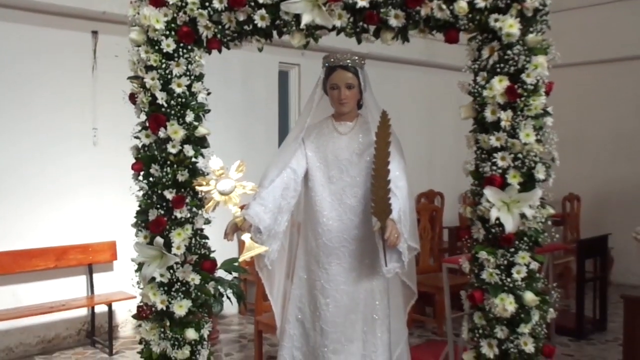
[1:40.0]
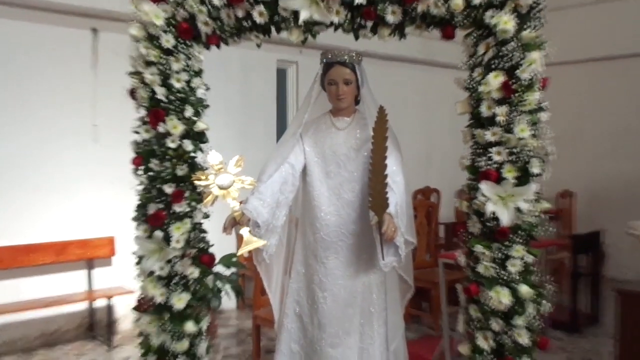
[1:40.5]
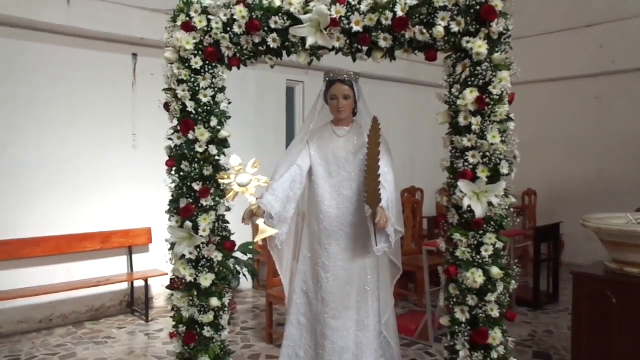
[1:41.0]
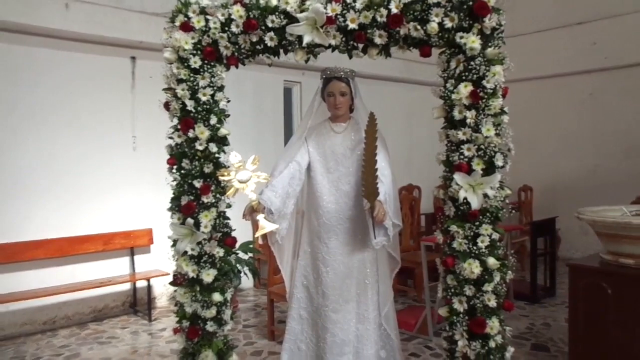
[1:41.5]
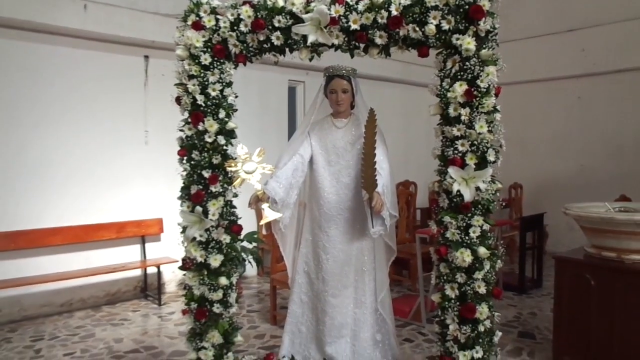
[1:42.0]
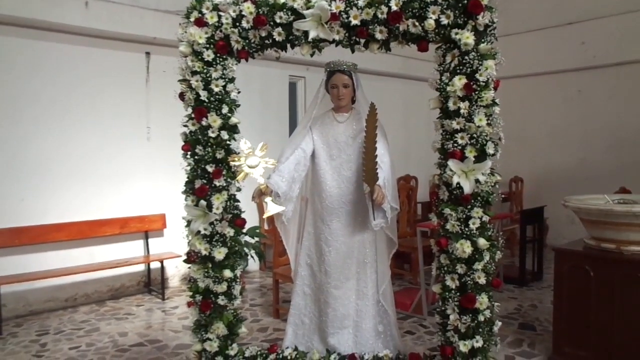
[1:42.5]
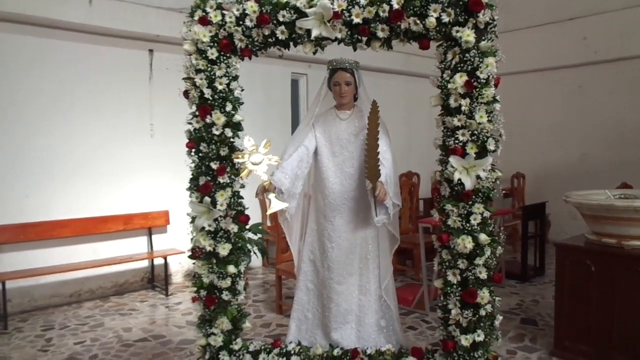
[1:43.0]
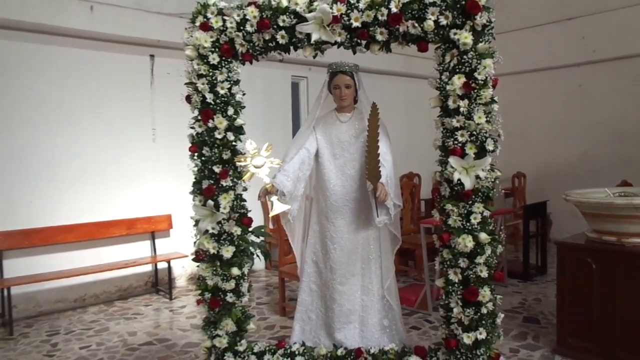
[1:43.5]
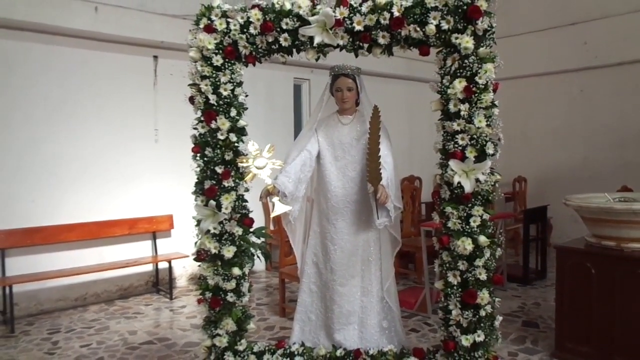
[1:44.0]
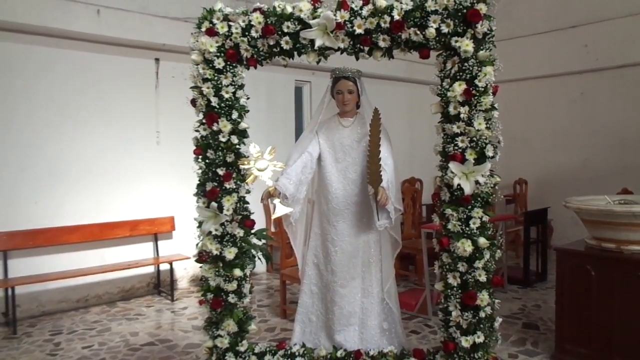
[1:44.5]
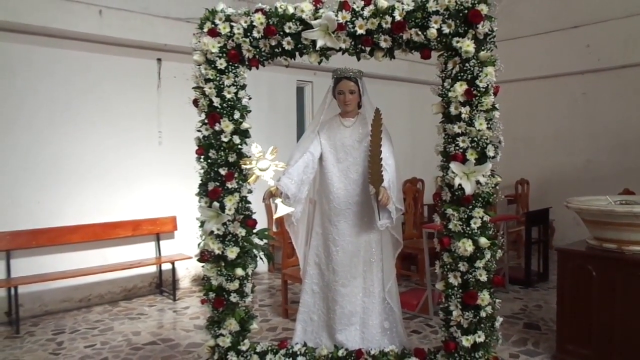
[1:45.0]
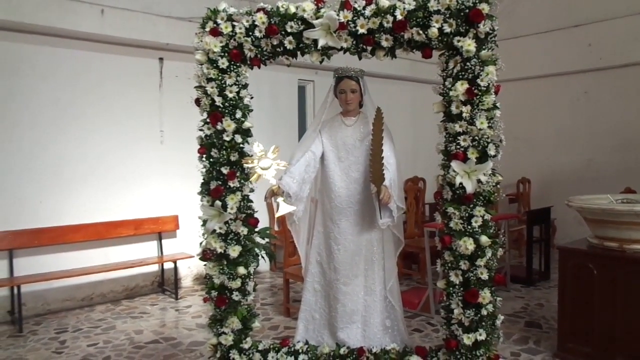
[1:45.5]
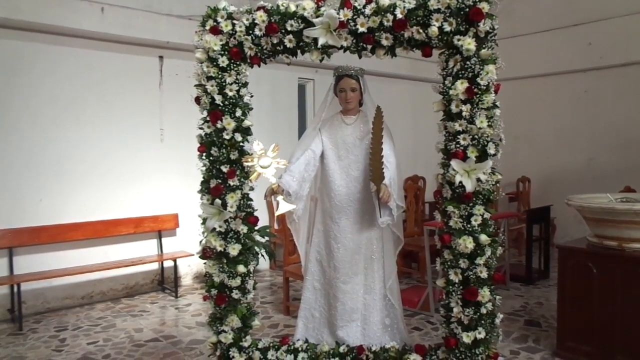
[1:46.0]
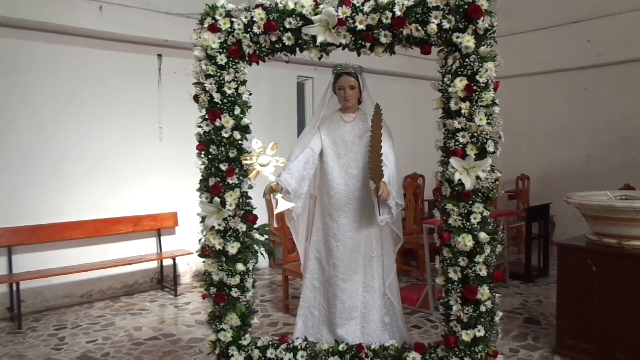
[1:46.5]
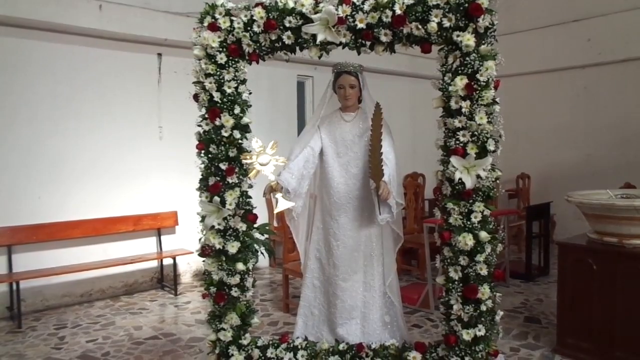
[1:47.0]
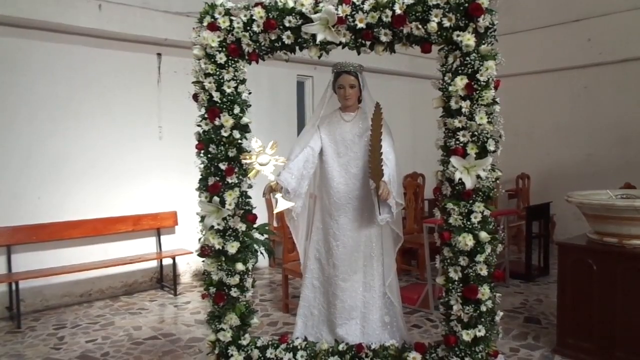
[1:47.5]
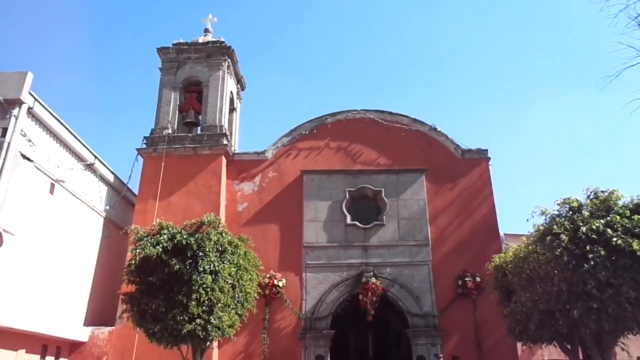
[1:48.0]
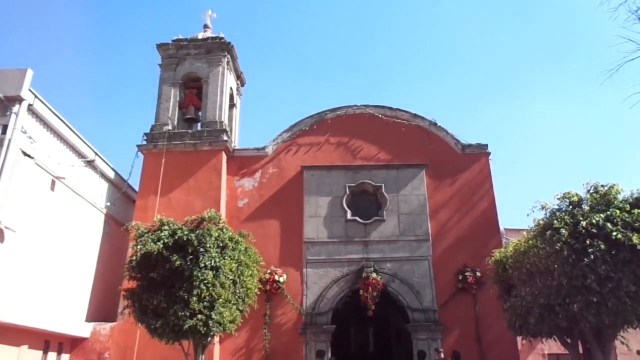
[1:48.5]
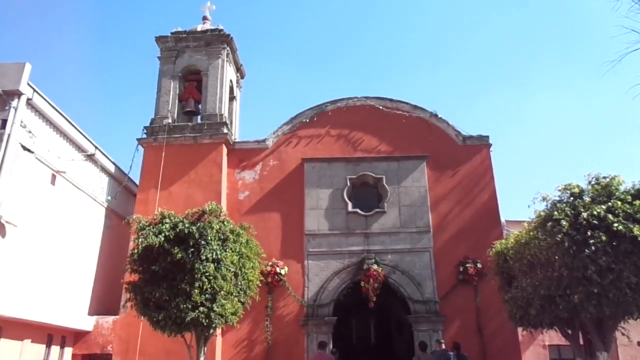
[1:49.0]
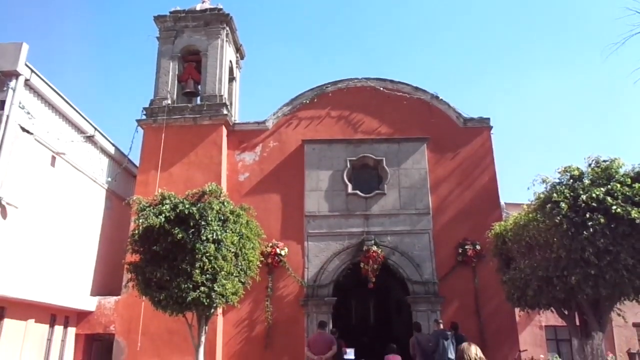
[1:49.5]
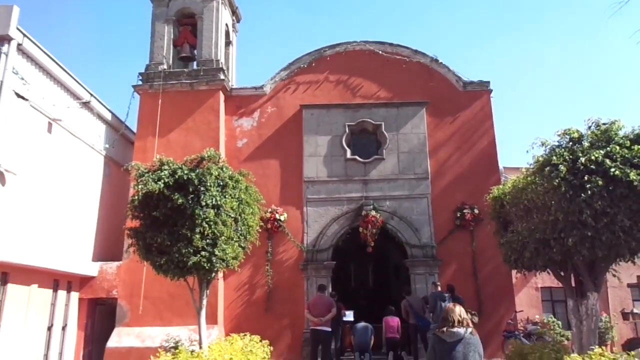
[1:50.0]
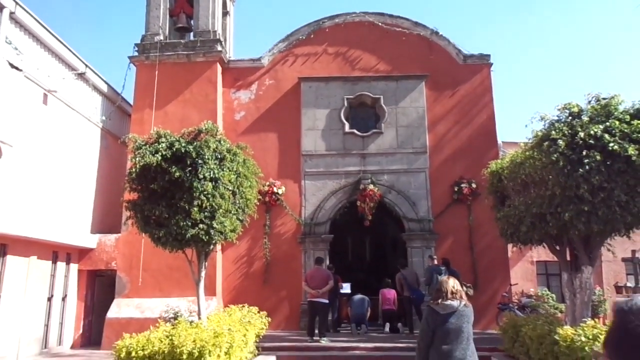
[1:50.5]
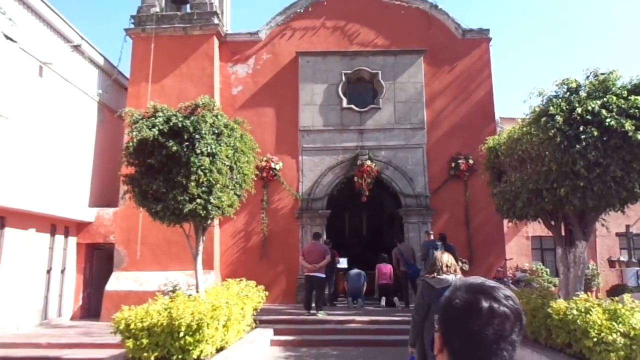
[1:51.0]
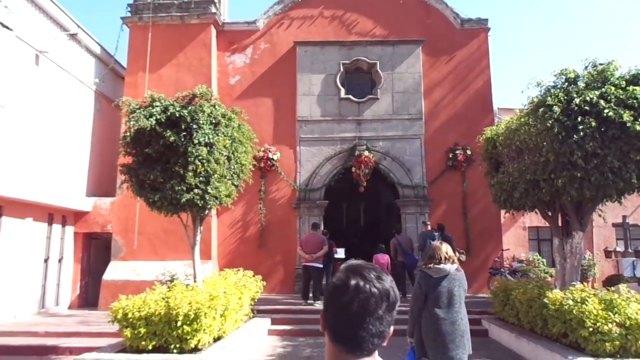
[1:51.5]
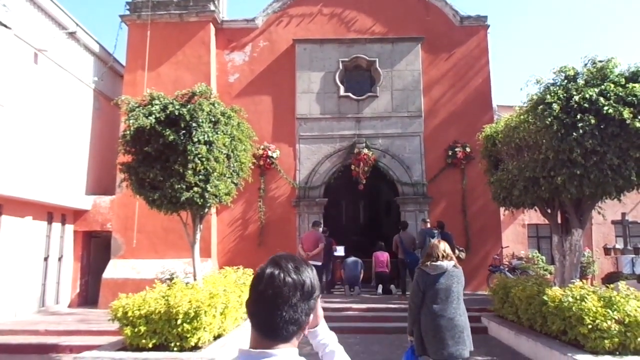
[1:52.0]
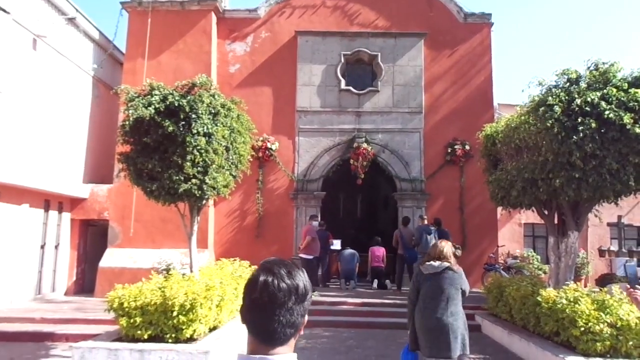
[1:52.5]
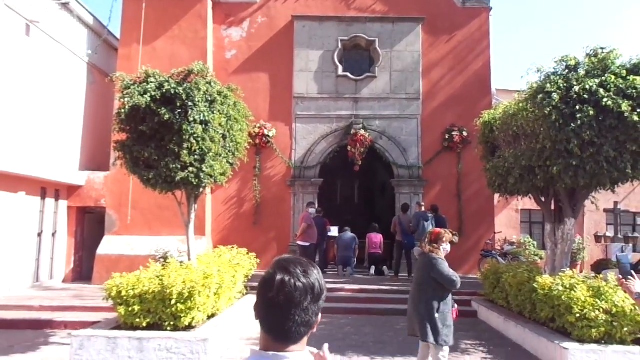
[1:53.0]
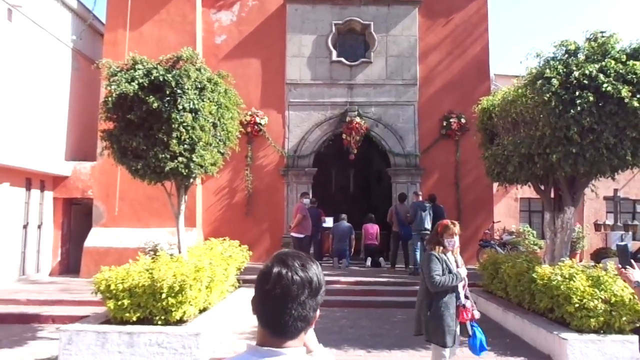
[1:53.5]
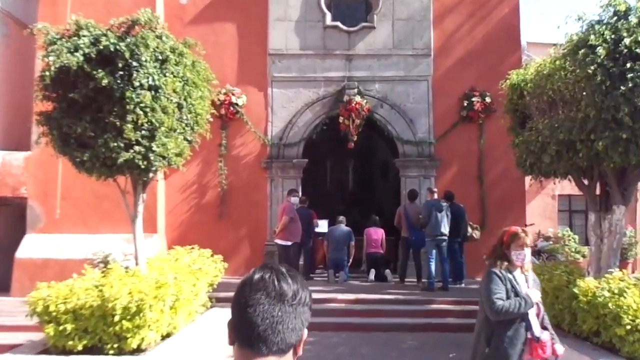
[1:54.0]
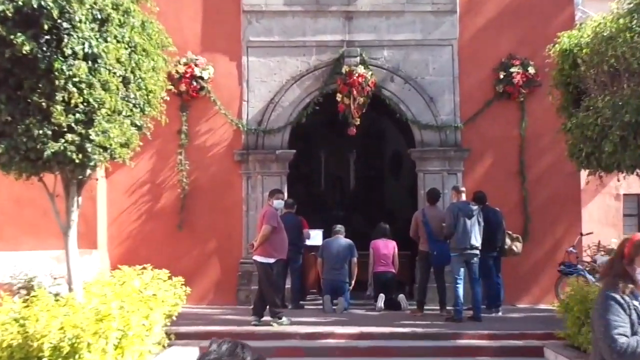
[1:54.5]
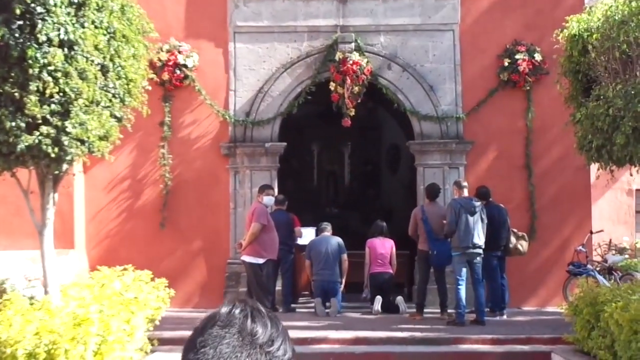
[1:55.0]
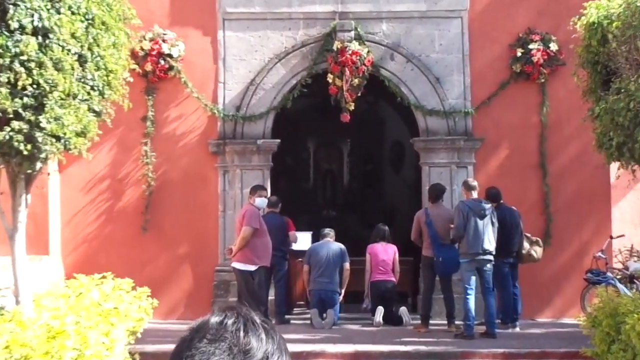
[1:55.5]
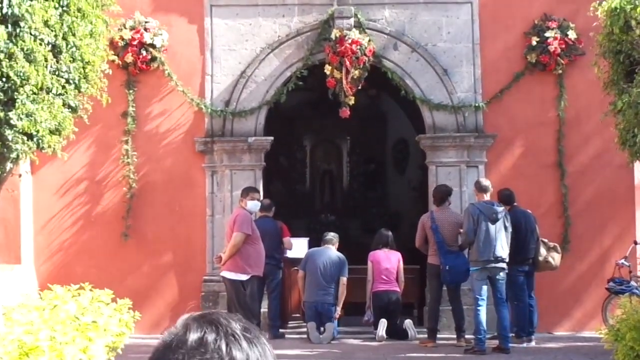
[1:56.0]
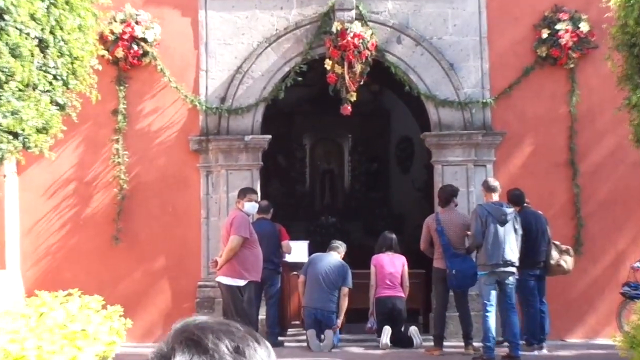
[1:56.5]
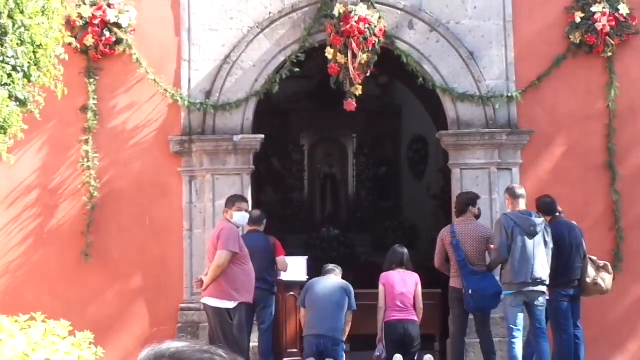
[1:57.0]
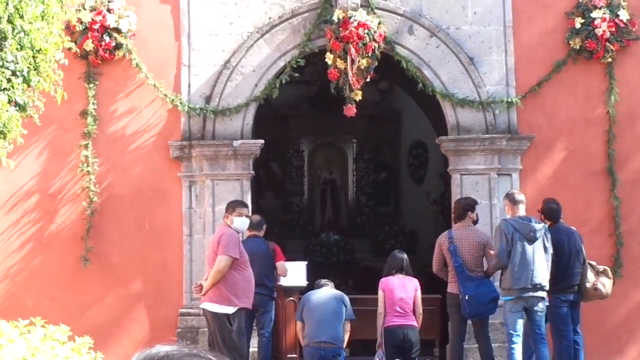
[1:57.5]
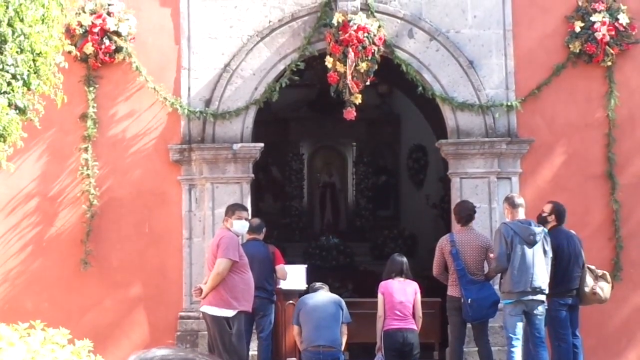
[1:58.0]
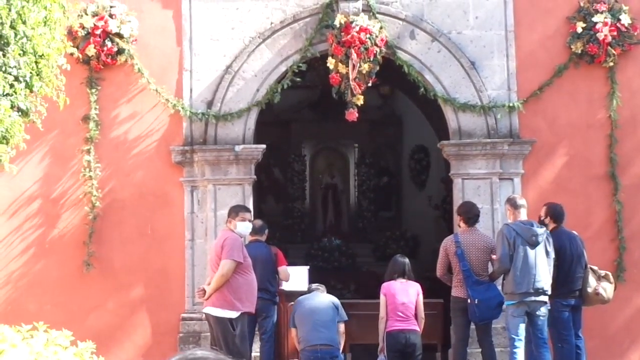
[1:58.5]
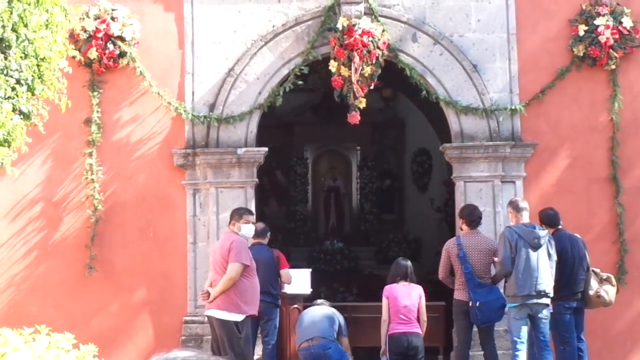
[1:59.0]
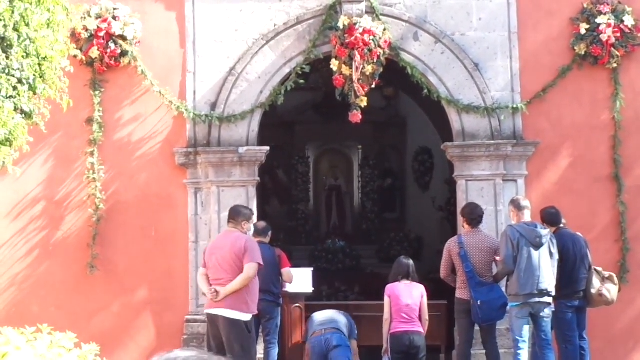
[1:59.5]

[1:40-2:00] Inside a small, intimate church is a kind of full-size dummy of a female, dressed in what looks like a white wedding dress, with a silver crown and a long white veil. She holds a big wooden feather in her left hand and a fan in her right. She is positioned within a kind of floral frame made of leaves, carnations, daisies and lilies. The camera pans back to show a wooden bench against the whitewashed walls, with the font positioned on the right-hand side. The scene then changes to the outside of the church, a rather plain-looking building with a pretty bell tower that stands out against a blue sky without a cloud in sight. People are hanging around the doorway of the church looking in, and some are wearing face masks.